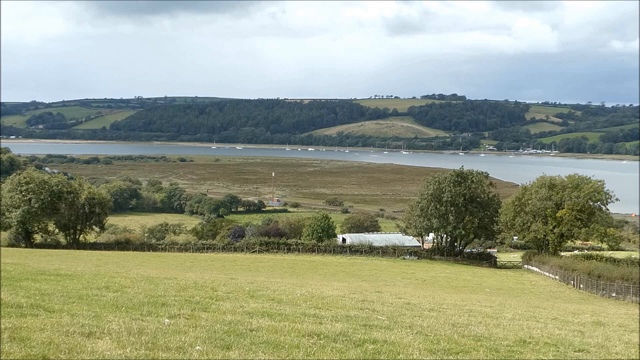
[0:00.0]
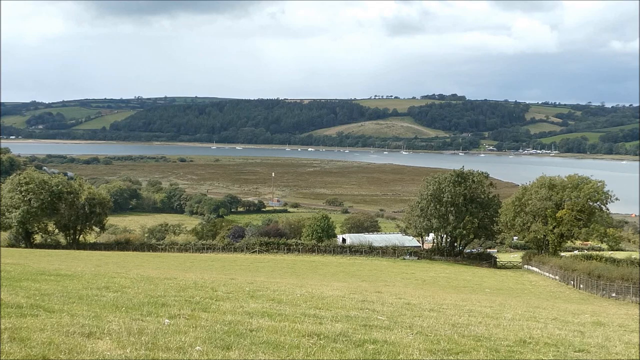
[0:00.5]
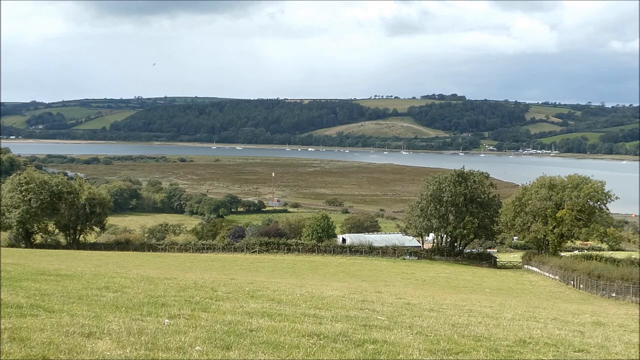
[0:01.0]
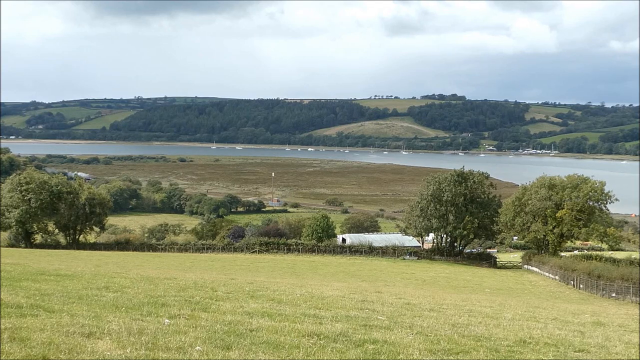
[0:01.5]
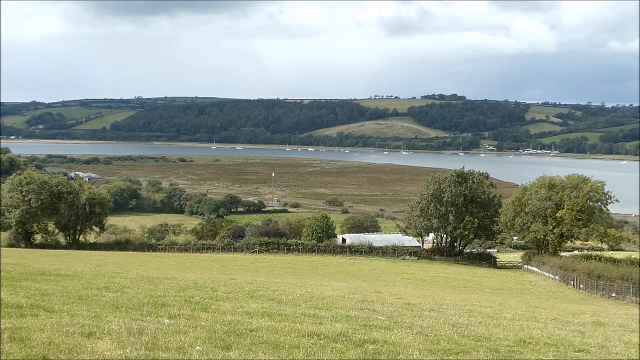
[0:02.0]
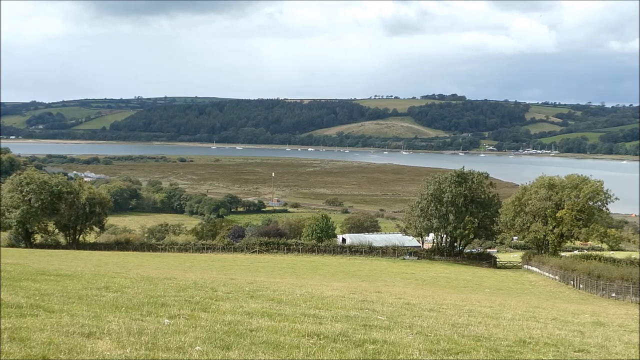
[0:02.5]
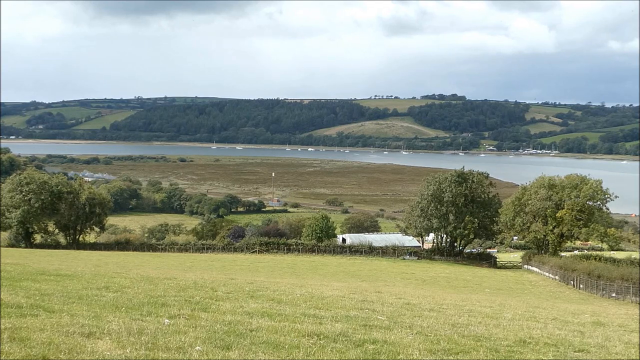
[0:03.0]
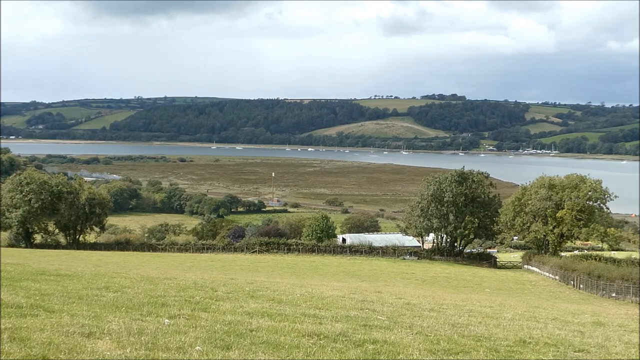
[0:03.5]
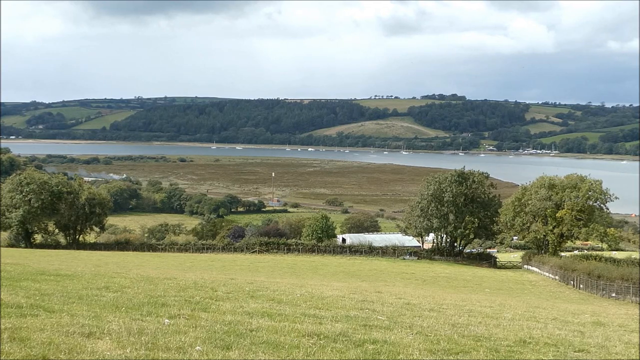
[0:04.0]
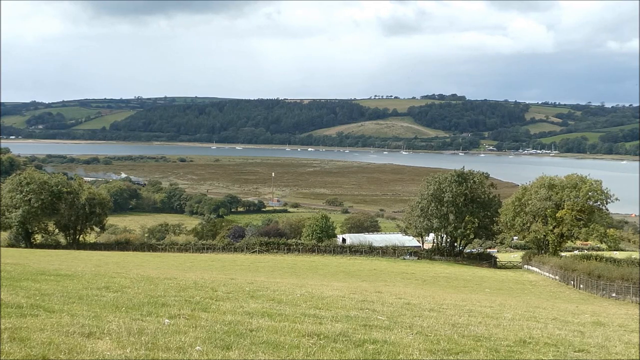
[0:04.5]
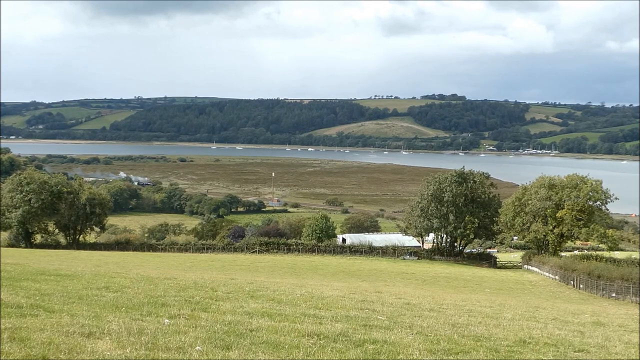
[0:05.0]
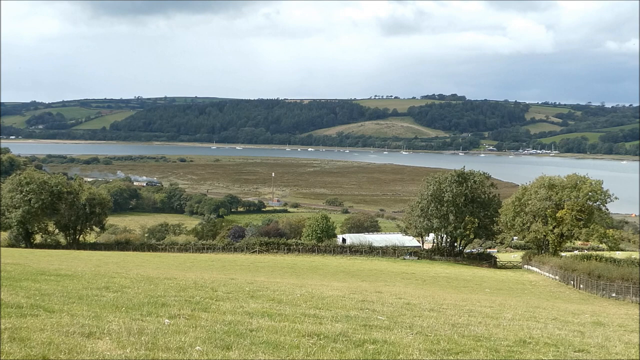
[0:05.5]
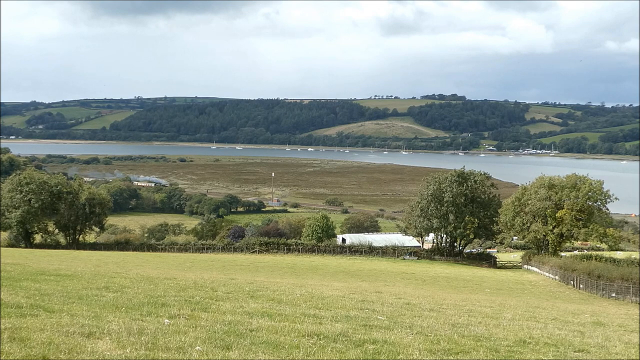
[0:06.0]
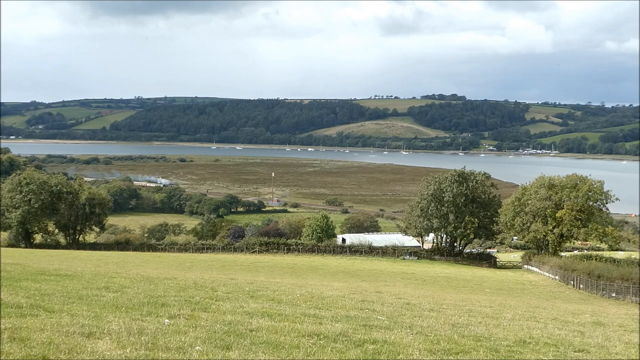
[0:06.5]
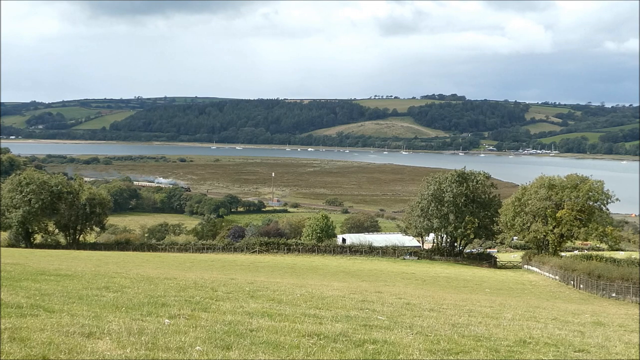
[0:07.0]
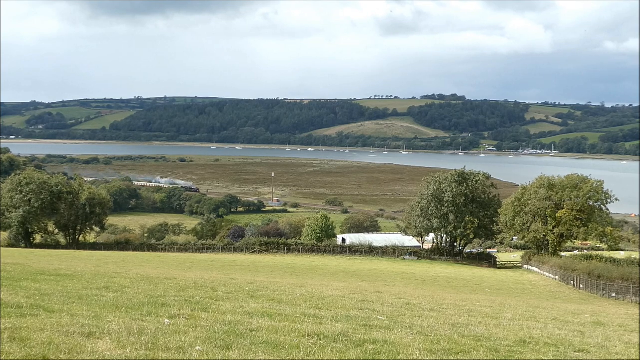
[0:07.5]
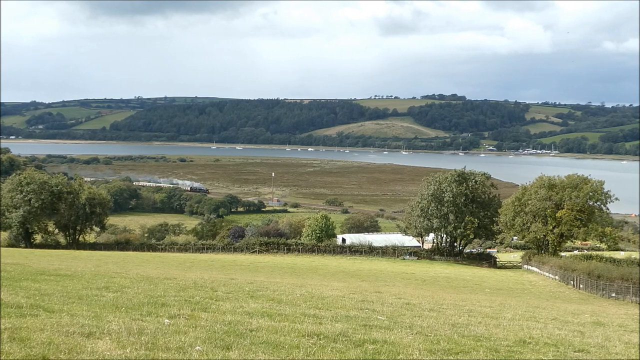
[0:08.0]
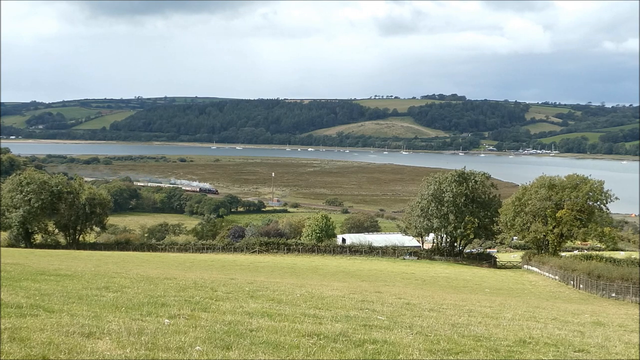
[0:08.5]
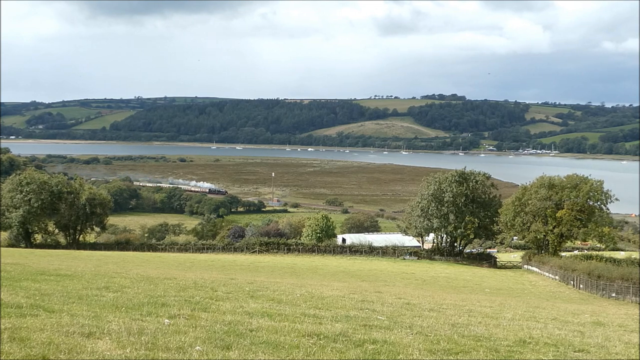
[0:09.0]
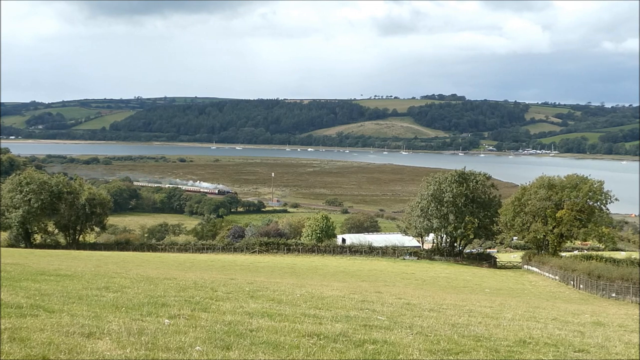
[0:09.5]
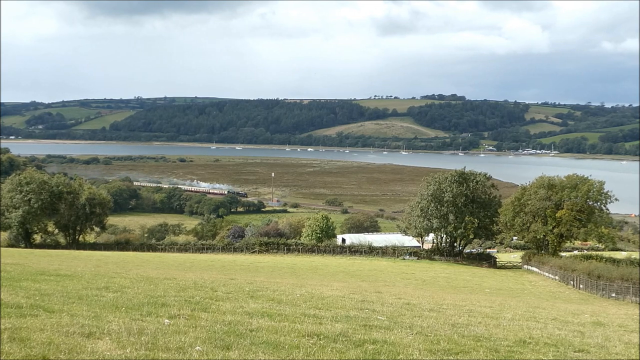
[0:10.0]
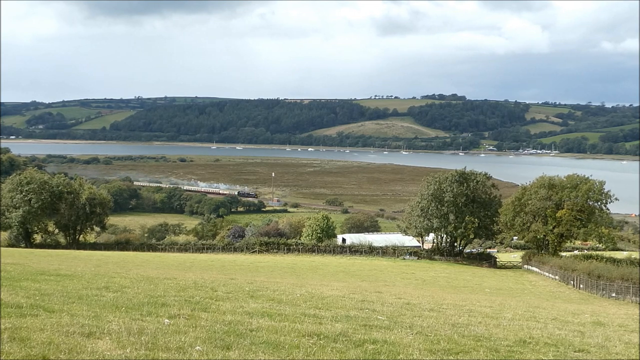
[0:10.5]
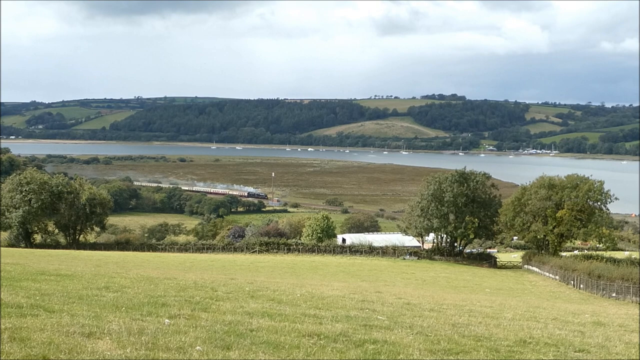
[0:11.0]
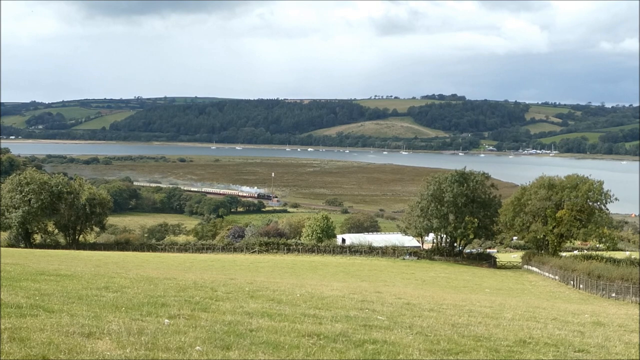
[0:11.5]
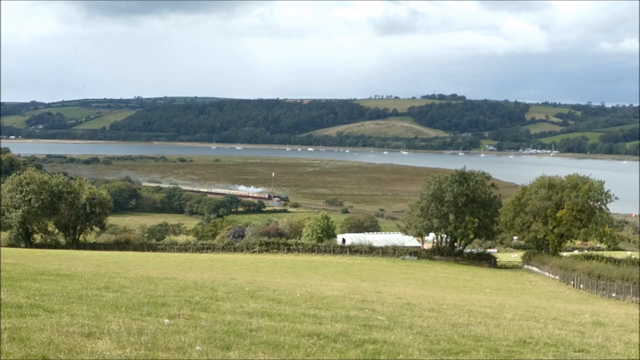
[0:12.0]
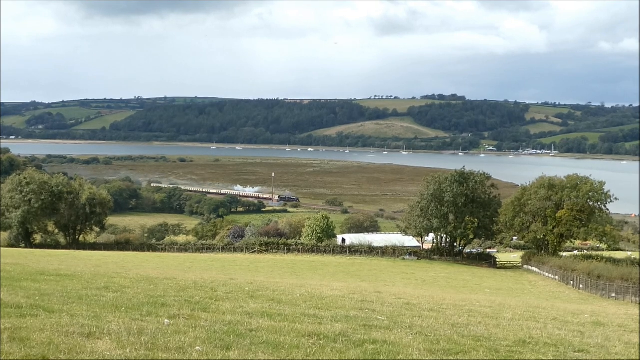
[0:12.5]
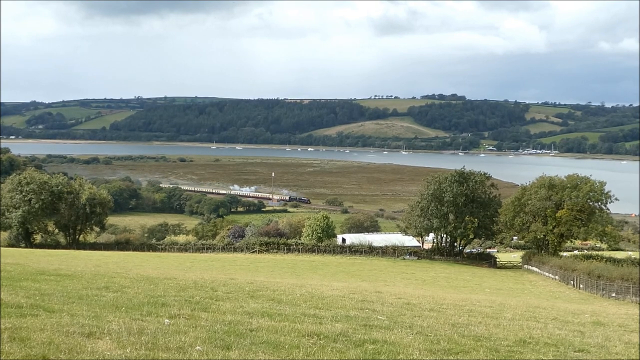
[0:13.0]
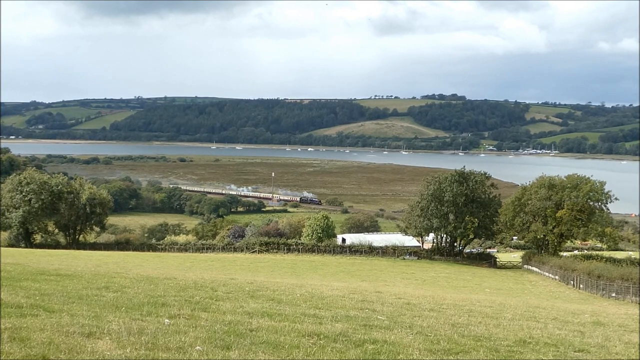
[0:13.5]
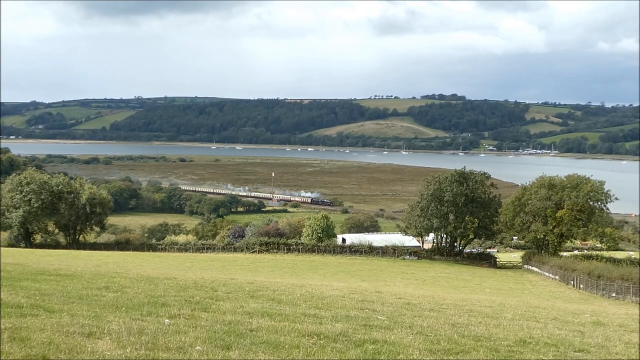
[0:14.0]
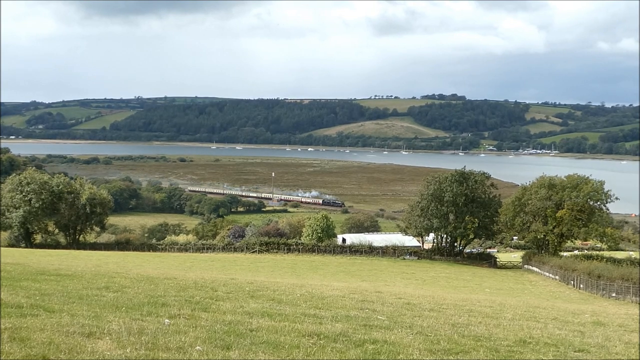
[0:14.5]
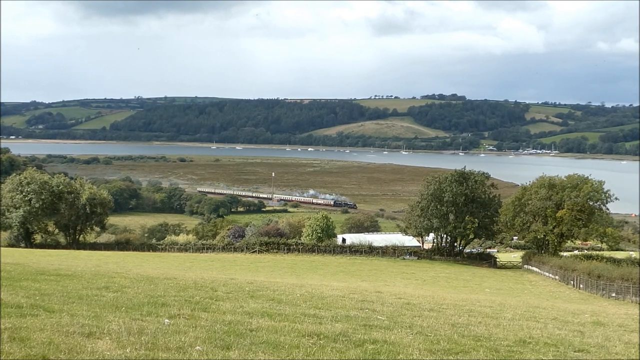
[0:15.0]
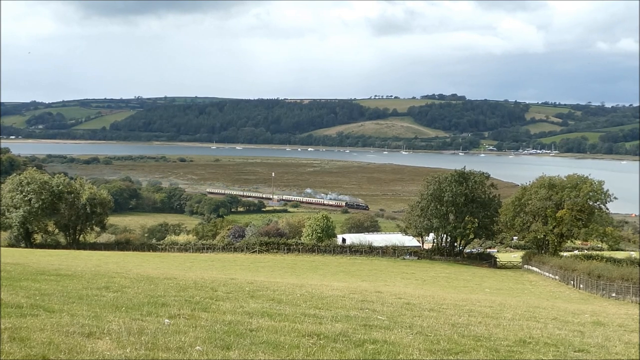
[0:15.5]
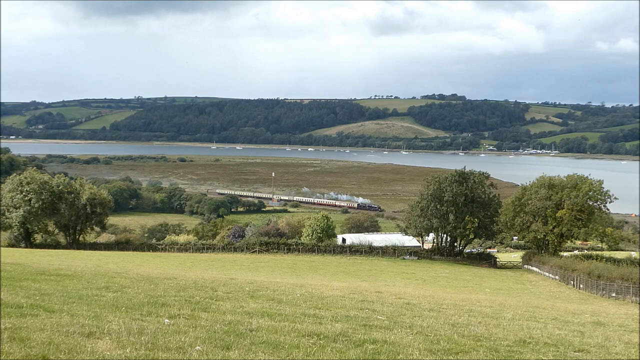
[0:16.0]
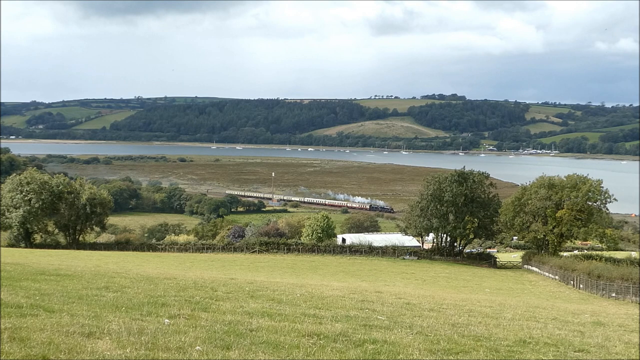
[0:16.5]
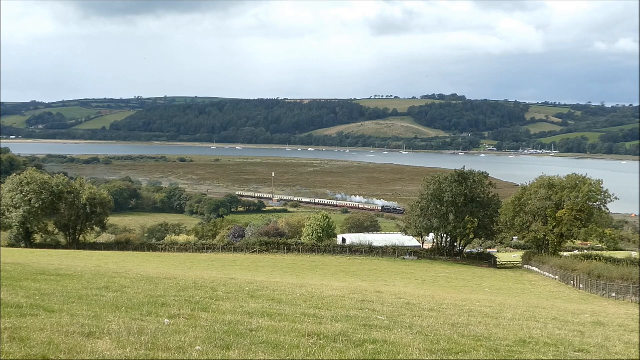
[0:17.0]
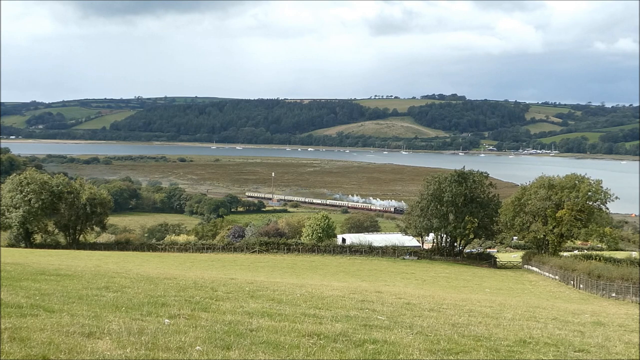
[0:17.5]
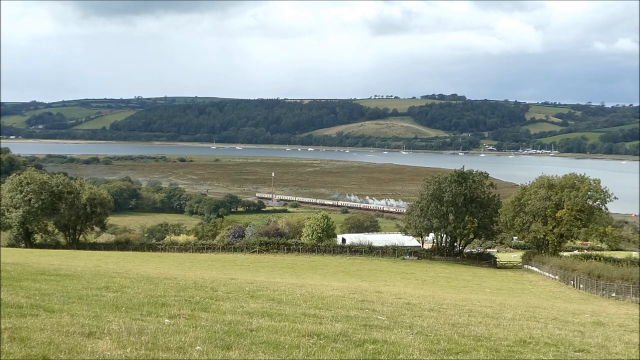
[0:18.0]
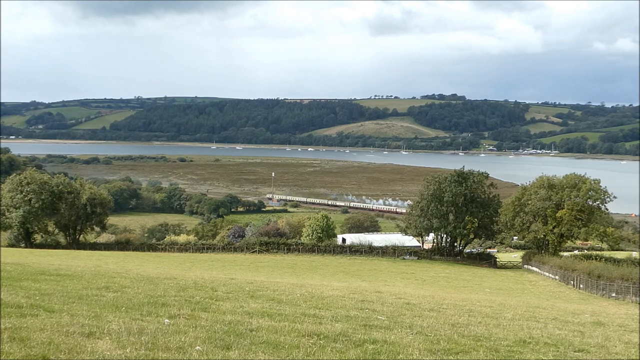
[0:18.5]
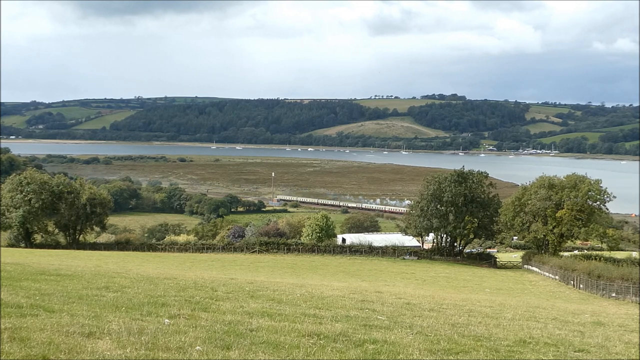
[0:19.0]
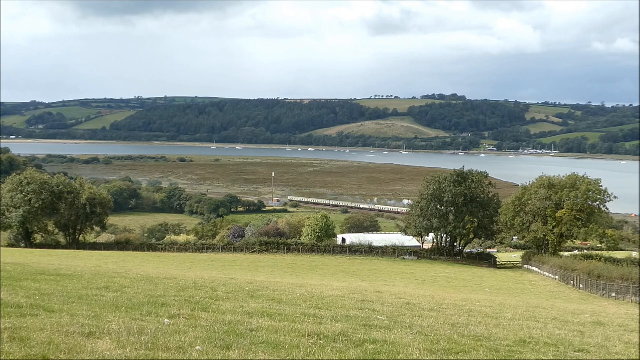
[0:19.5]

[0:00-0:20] The video opens on what looks like a very open countryside. A huge field fills the foreground, and in the center there are some trees: two decent-sized trees on the left-hand side and two slightly bigger trees on the right-hand side. Fencing is visible on the right side of the field and in the center, running across from left to right. At the top is the sky, along with another huge field or a hill that has much more greenery, apparently a lot of shrubs if not trees. A body of water is in the middle of the view, with a plain field just before the water. On the left-hand side, a train enters and travels toward the right side of the view.